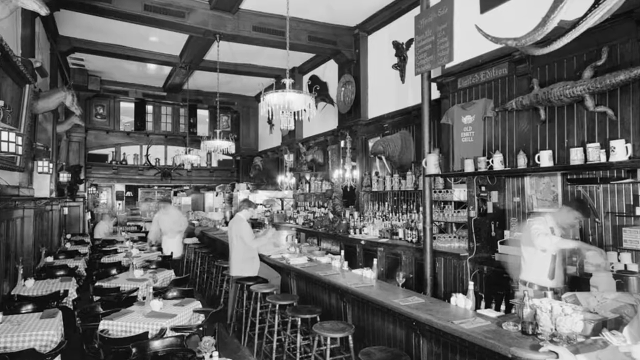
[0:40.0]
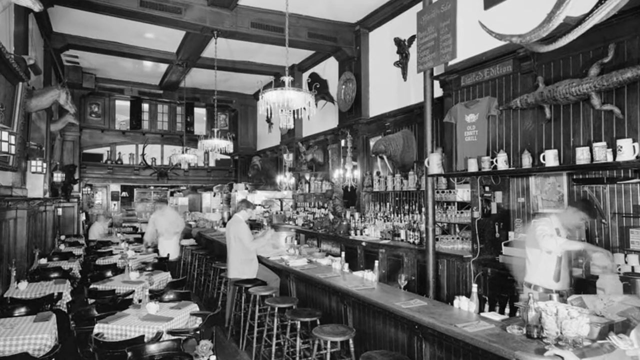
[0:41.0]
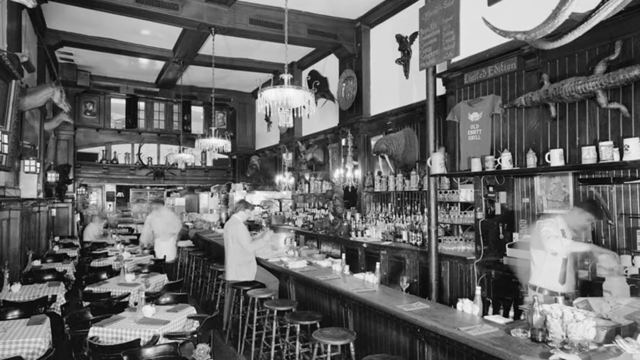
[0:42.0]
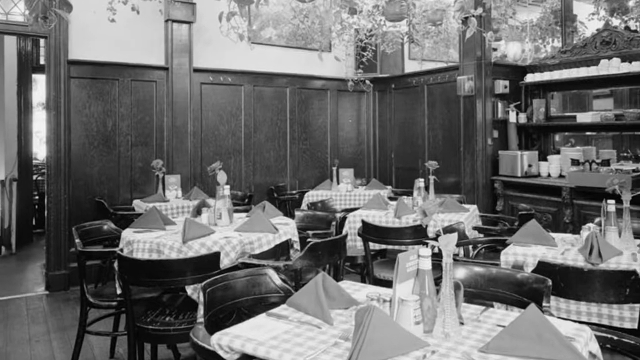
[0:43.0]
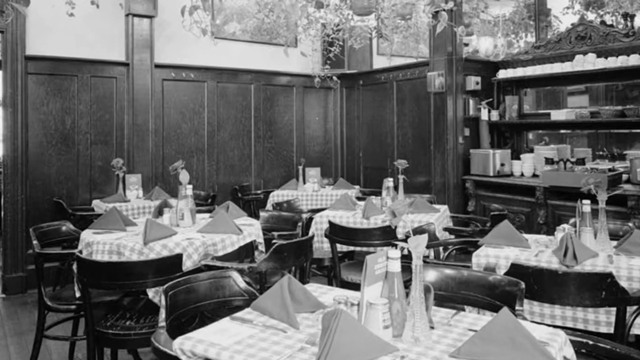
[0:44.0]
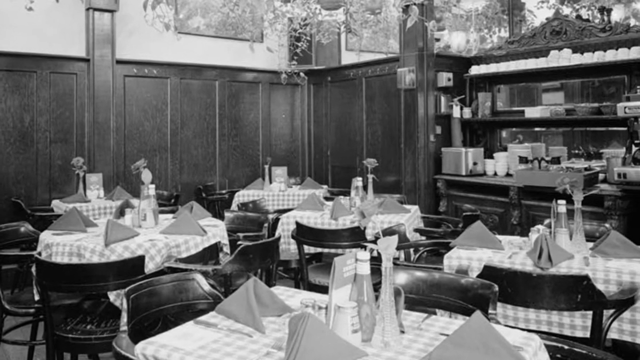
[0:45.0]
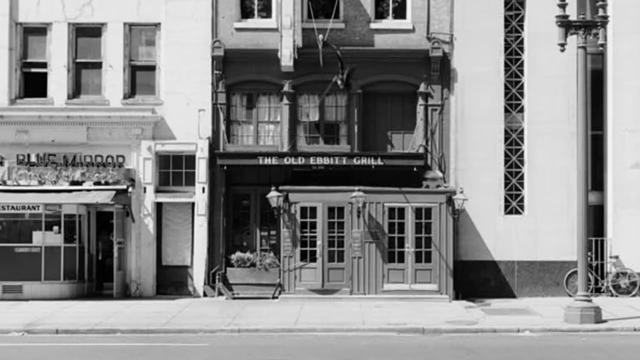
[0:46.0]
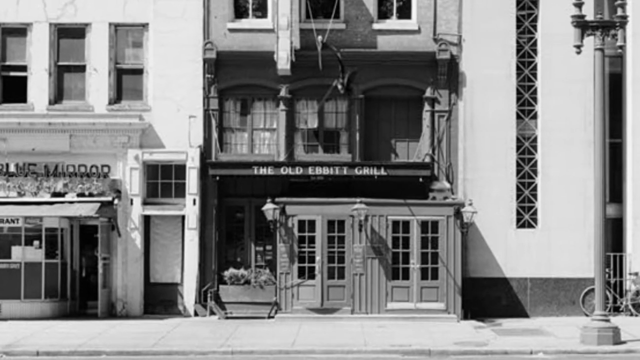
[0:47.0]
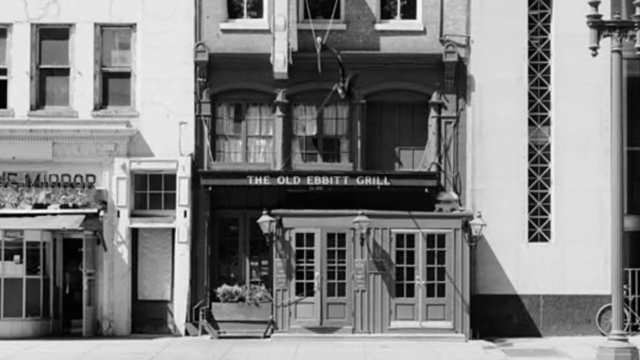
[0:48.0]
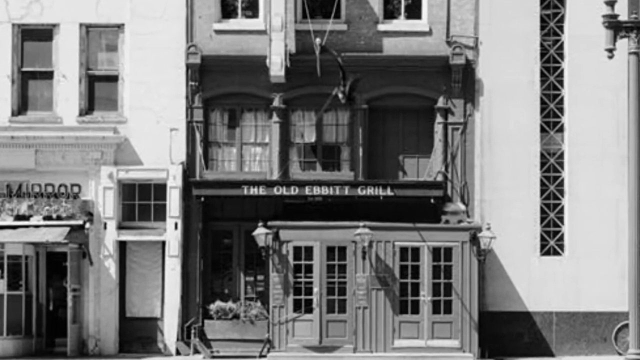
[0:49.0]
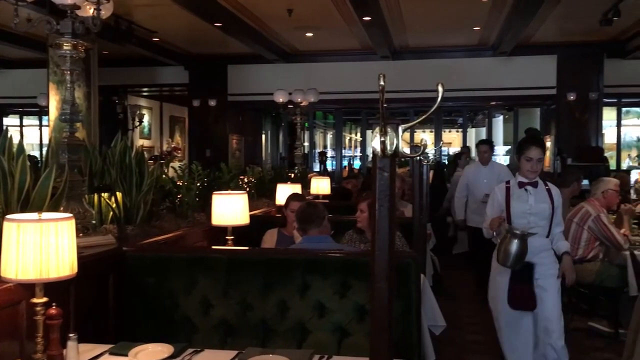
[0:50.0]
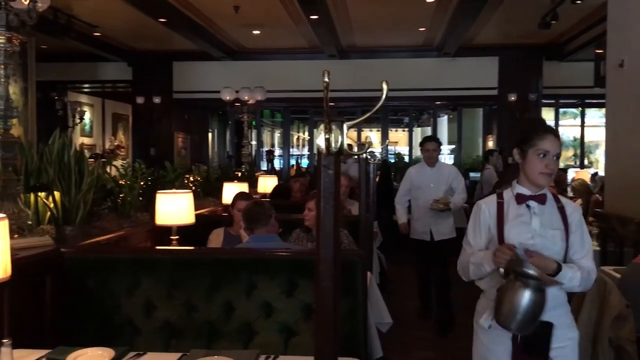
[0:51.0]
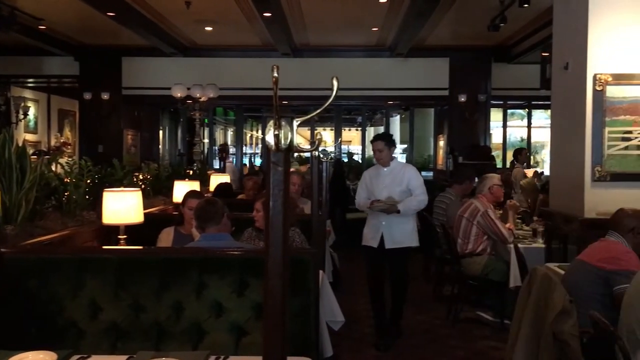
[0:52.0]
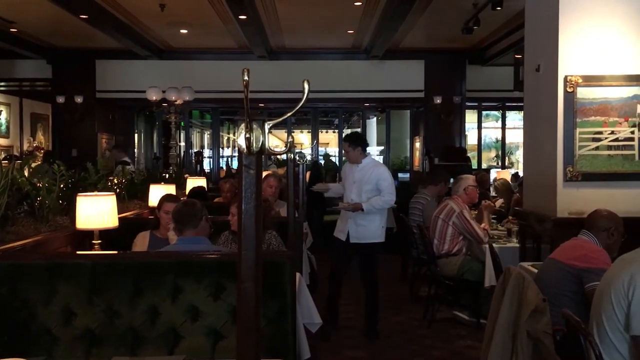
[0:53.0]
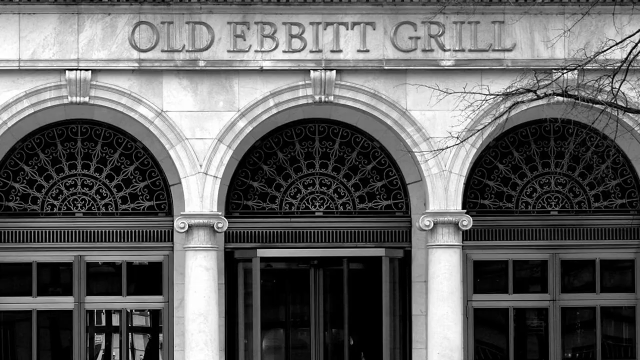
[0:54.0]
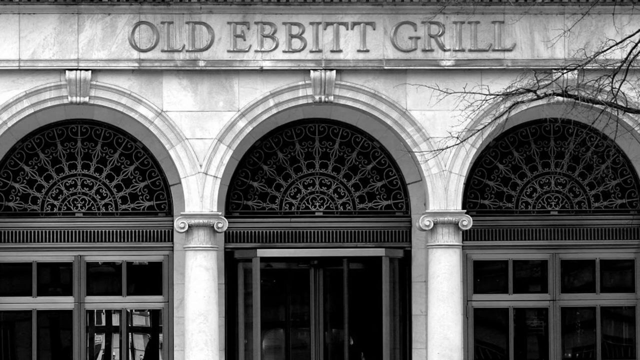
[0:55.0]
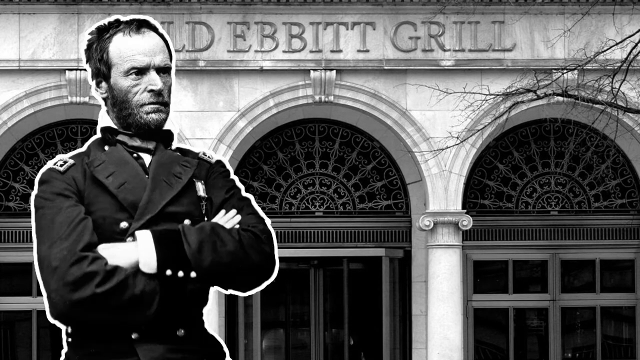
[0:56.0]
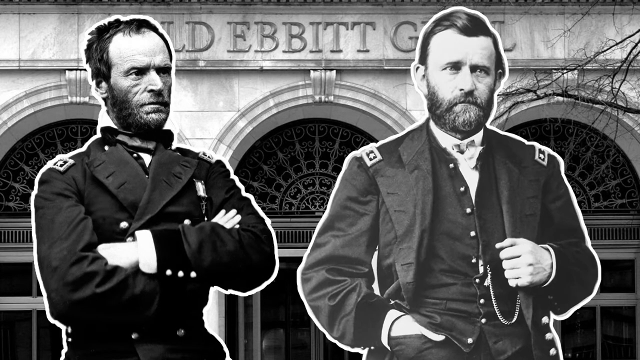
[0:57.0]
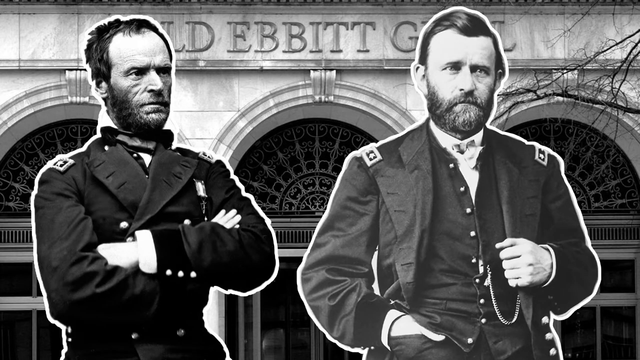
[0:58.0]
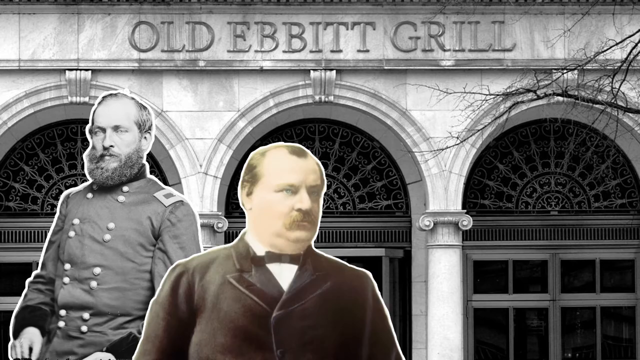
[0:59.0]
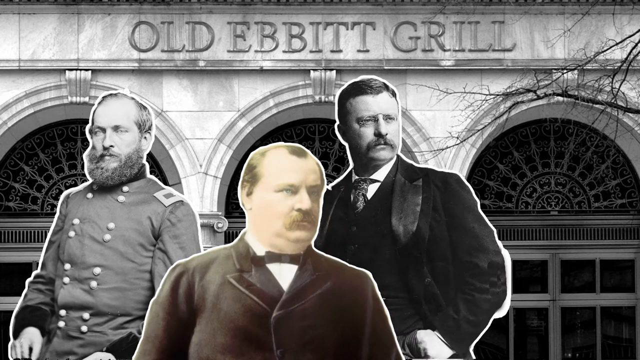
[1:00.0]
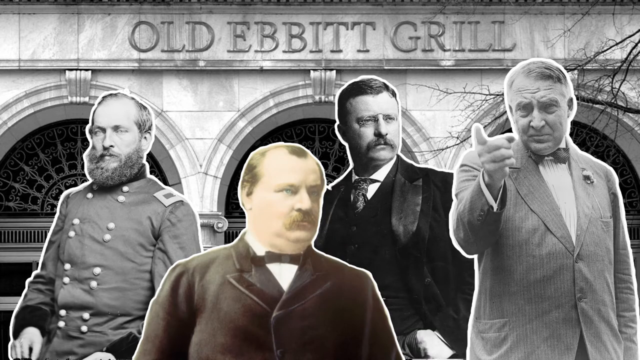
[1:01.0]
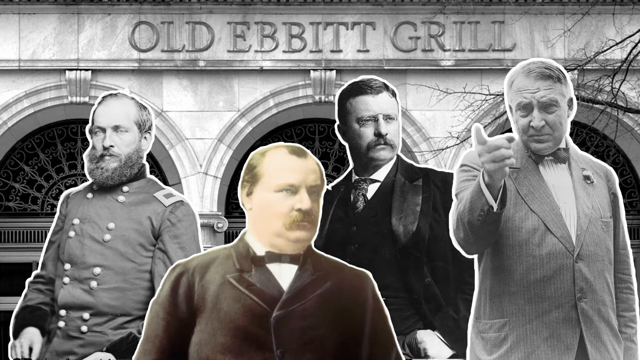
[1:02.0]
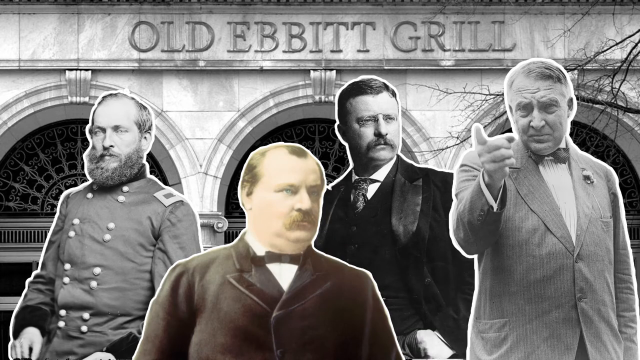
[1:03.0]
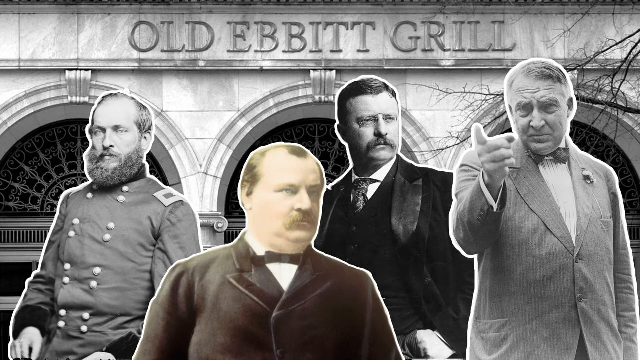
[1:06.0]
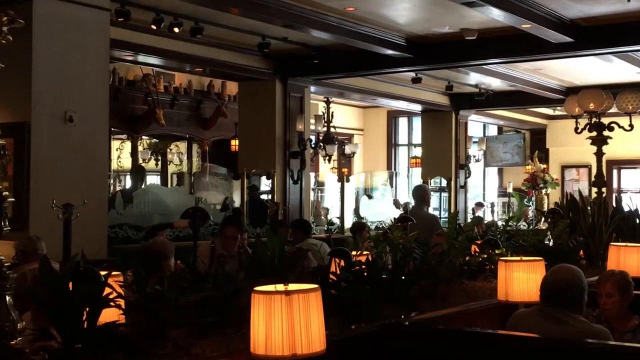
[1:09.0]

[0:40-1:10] An older black-and-white photo shows a dining room with tables set with linen, napkins and plates. The video goes back to the exterior of the building, which states "Old Ebbet Grill"; this time it has somewhat different colors, some white and some darker. It continues with what appear to be historical images of men dressed in older clothes, wearing jackets. One has his arms crossed in front of him in a seemingly defensive stance, with no smile and a harsh look, looking at something off to the side. The other man is more open but still not smiling; his left hand holds his jacket, pulling it down, while his right hand is on his hip. Their jackets are very similar, with the same shoulder buttons. The video then shows other individuals, apparently older, historically important figures.